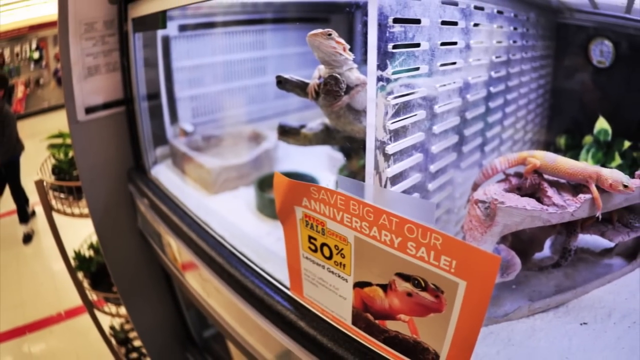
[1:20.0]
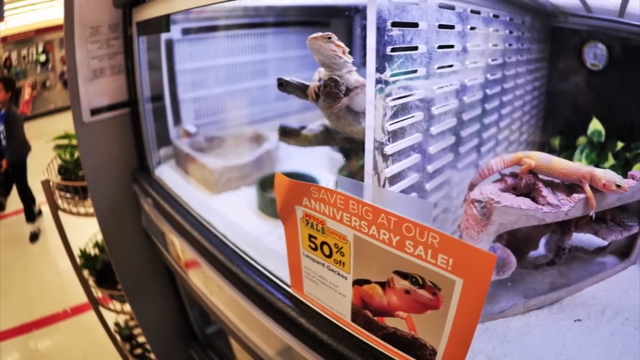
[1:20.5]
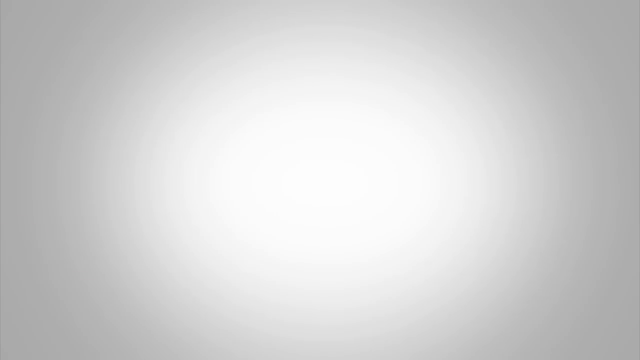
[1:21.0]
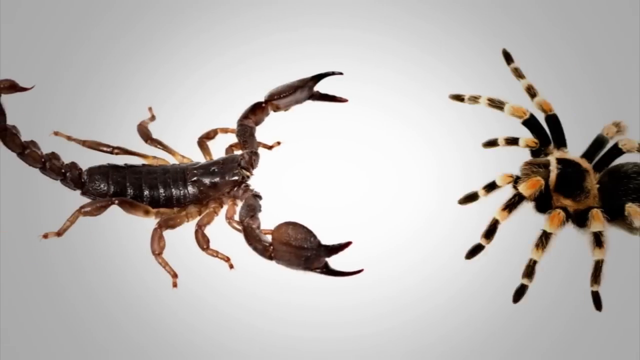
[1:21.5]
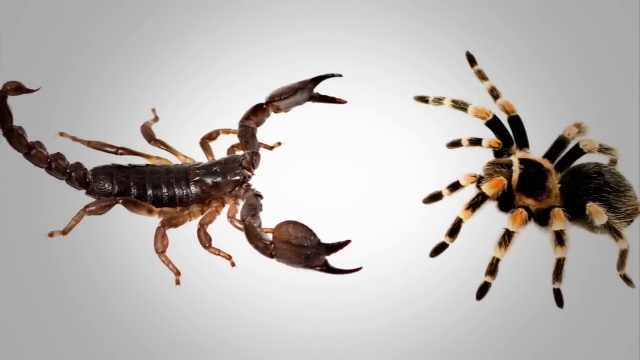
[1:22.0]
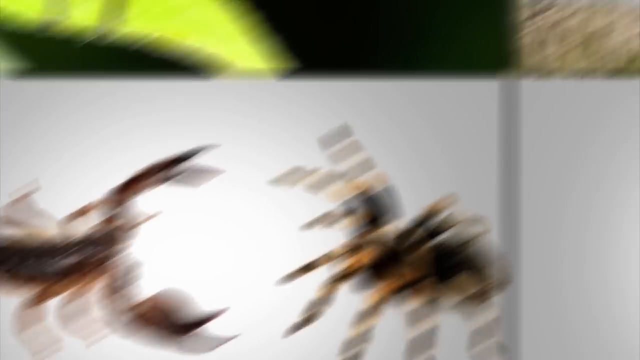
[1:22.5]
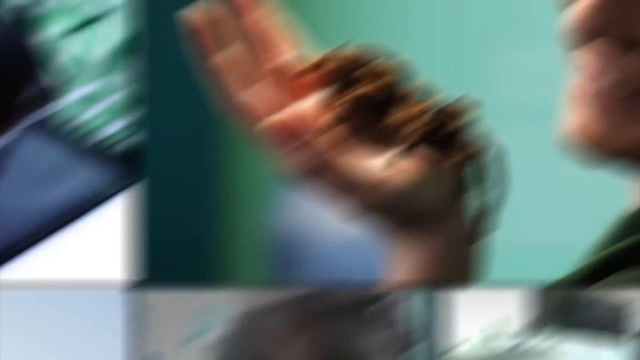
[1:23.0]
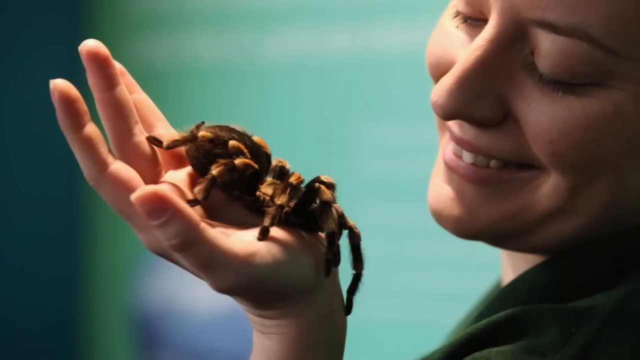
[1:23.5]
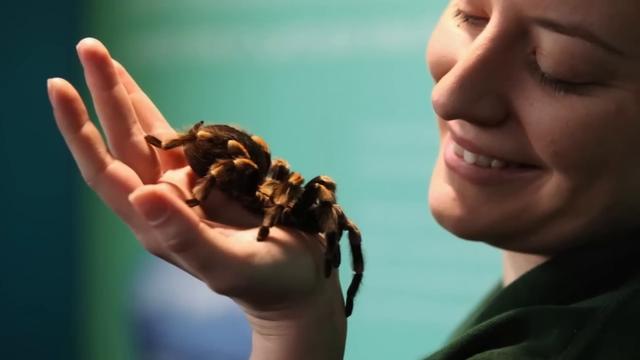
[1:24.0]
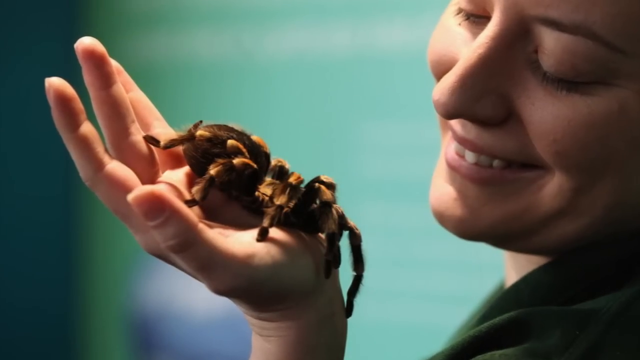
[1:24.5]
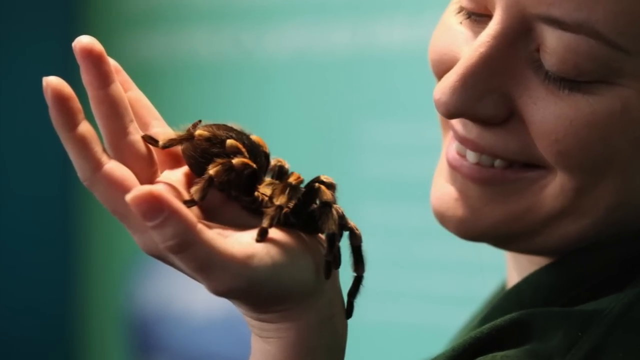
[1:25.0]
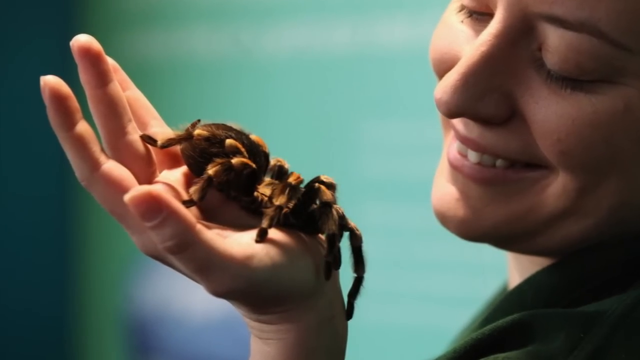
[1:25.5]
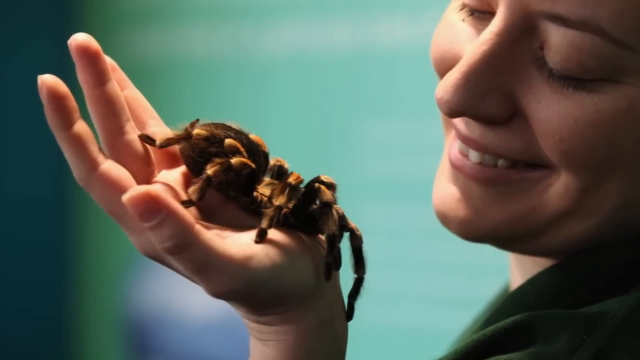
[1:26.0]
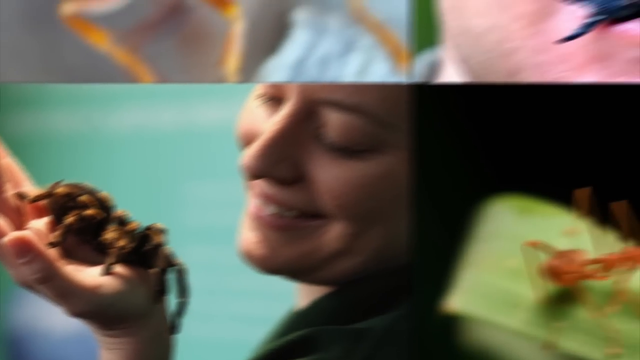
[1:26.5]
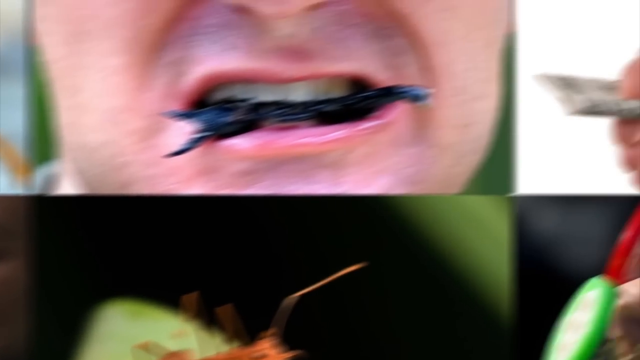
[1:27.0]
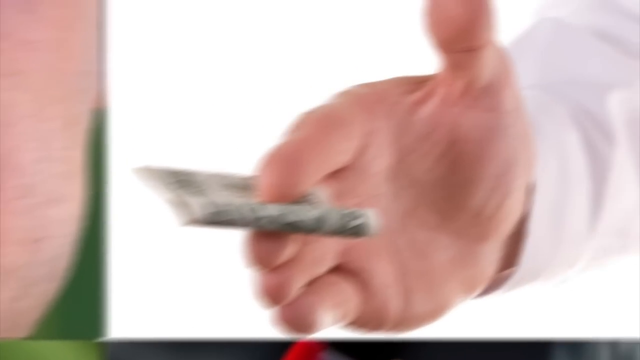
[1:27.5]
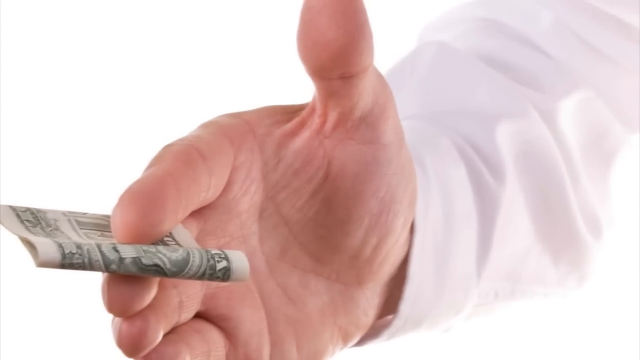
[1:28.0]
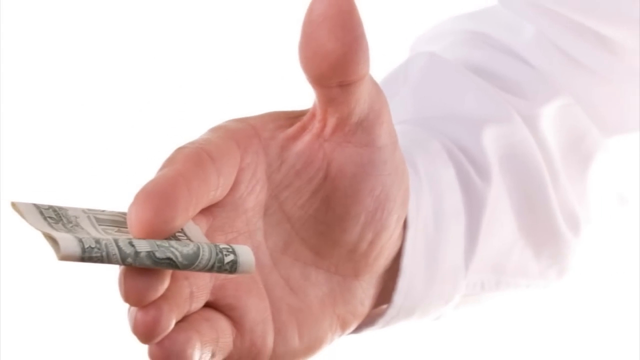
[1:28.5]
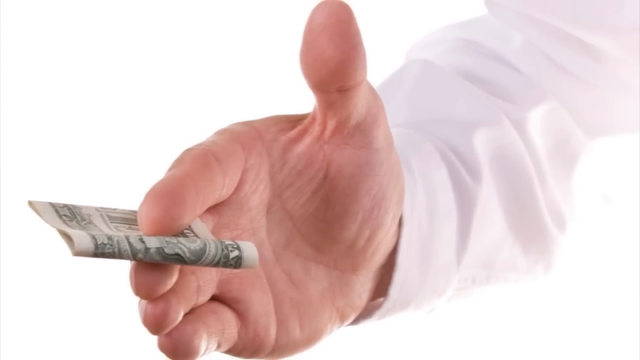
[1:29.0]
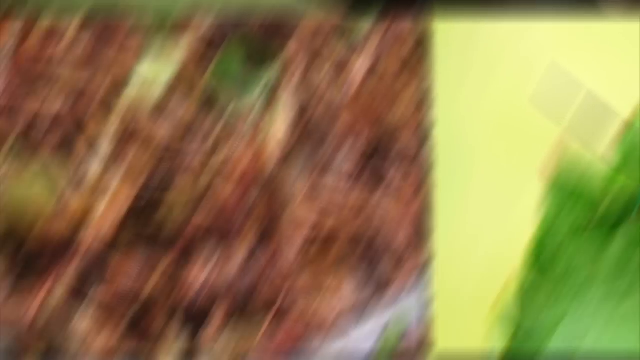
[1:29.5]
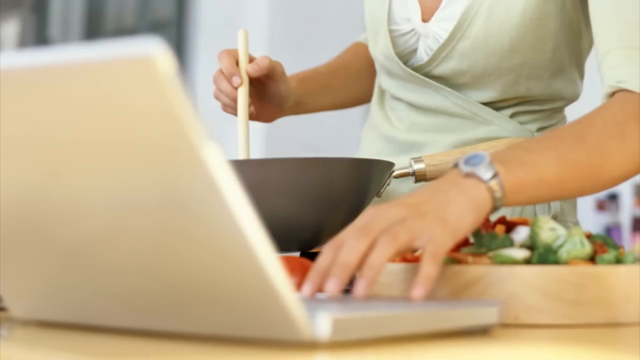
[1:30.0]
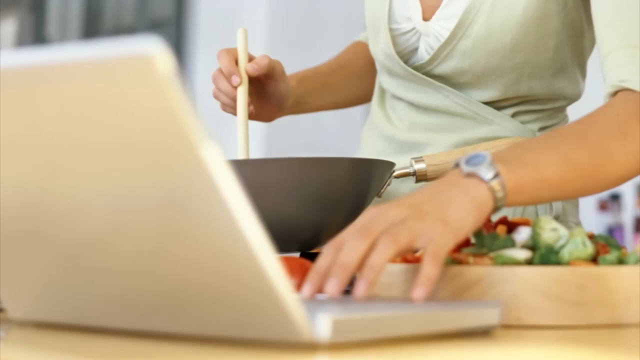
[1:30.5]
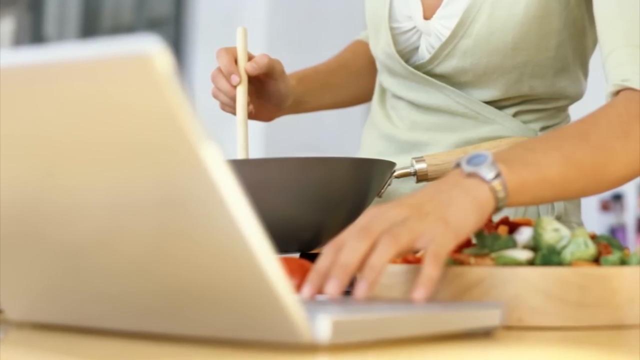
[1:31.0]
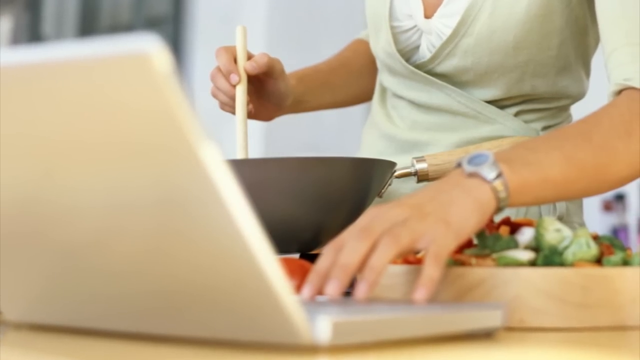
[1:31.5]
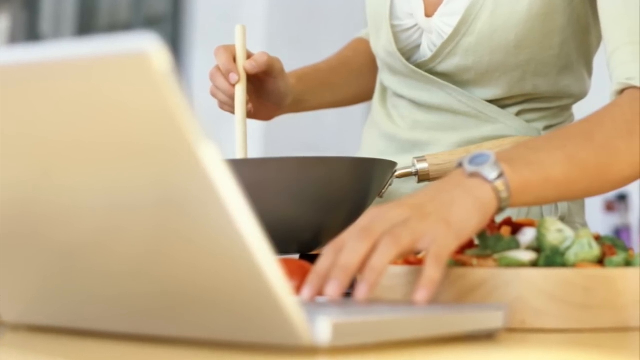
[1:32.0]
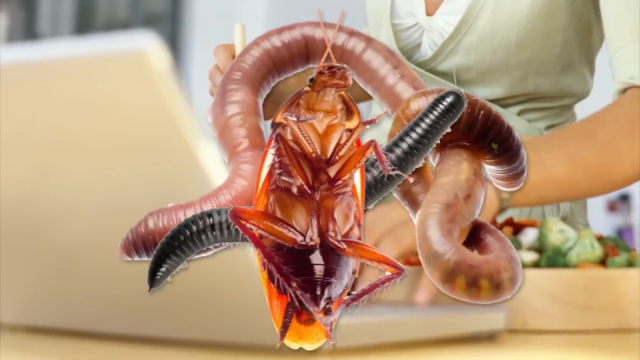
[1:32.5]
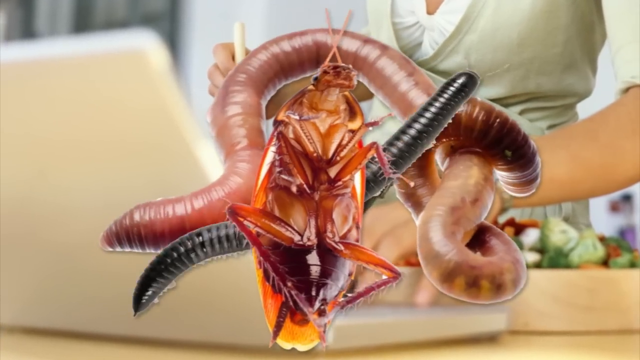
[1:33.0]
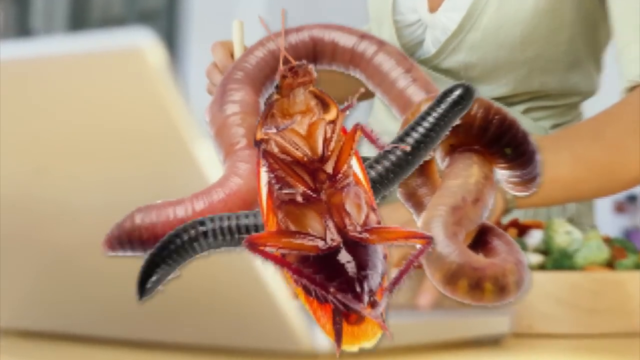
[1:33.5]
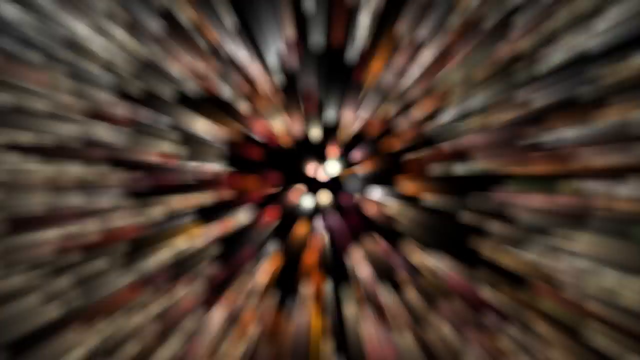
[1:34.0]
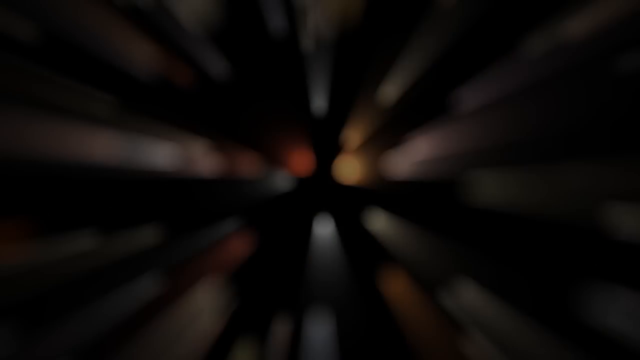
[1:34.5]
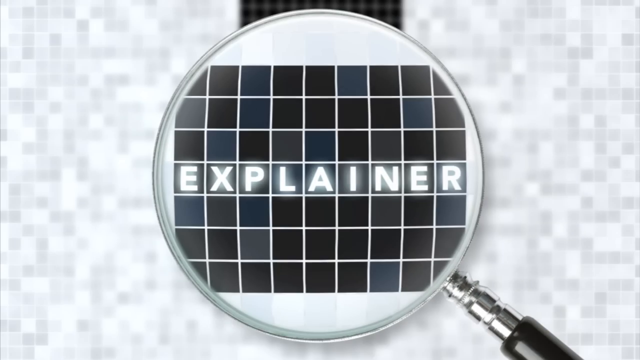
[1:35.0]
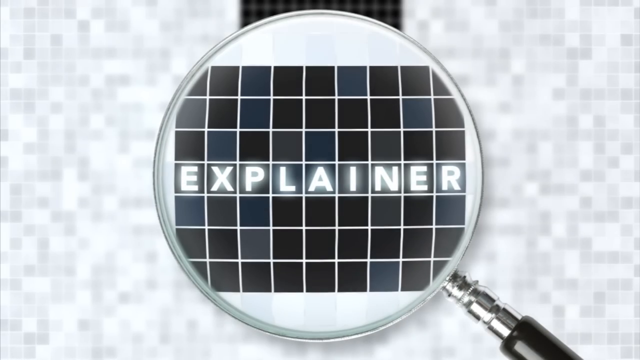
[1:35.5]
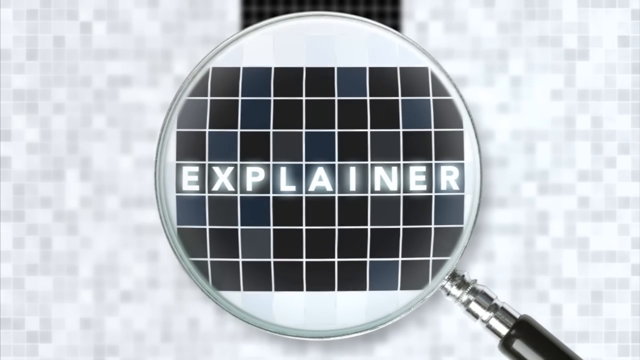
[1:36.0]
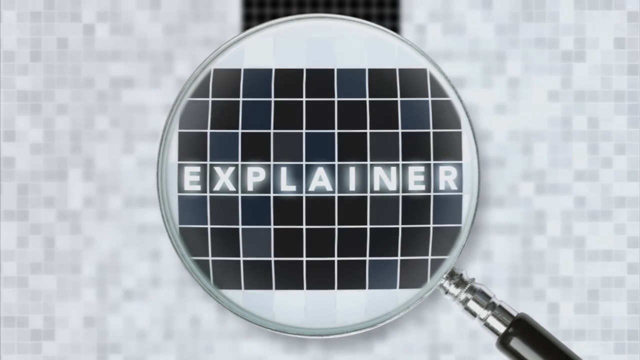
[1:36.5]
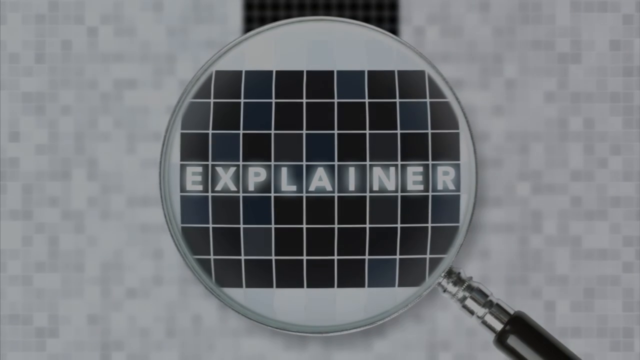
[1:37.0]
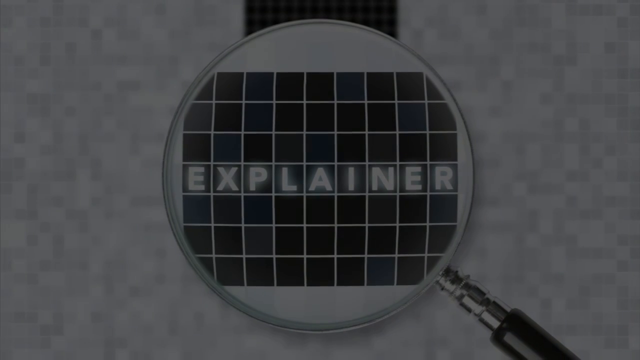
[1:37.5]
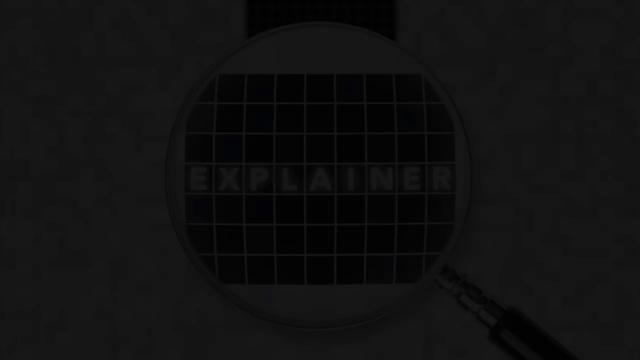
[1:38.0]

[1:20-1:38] In the pet shop, two side-by-side cages hold lizards; one looks like a gecko, and the other lizard is unidentified. A hairy tarantula with orange stripy legs appears, with a scorpion on the left side. A woman holds the fuzzy tarantula, which is very big, thick and hairy, and smiles at it. A hand in a white shirt holds some money. A woman cooks at a wok while watching her laptop. Some worms and something like a cockroach pop up, moving. The explainer appears again and the video ends.